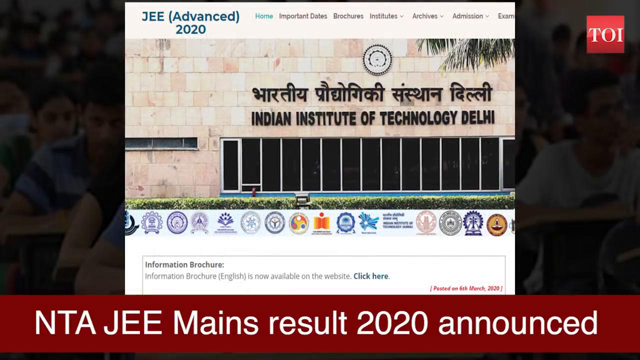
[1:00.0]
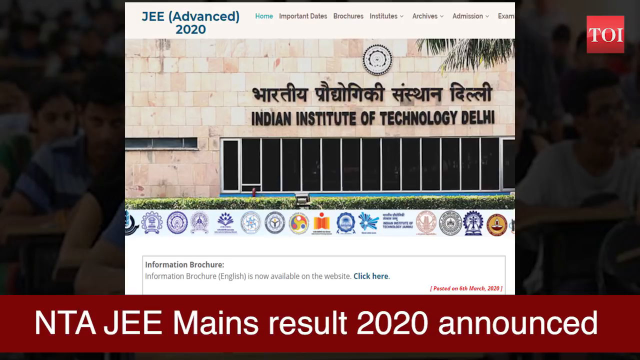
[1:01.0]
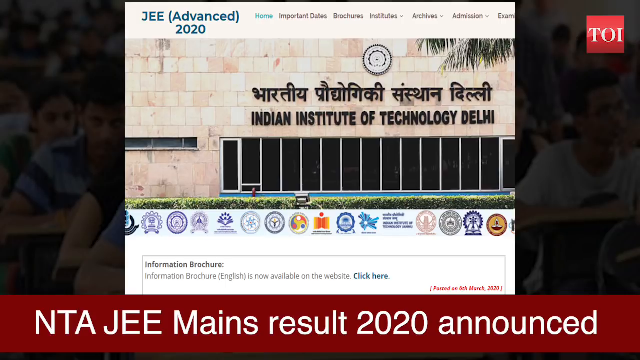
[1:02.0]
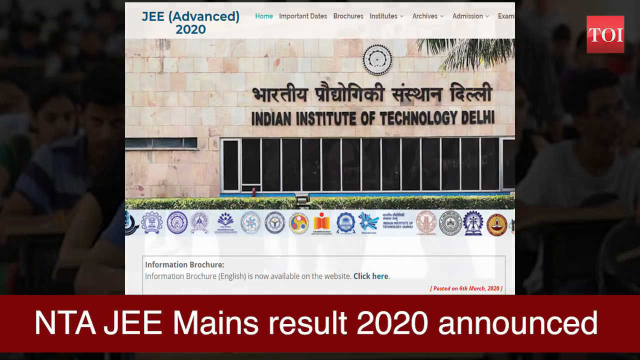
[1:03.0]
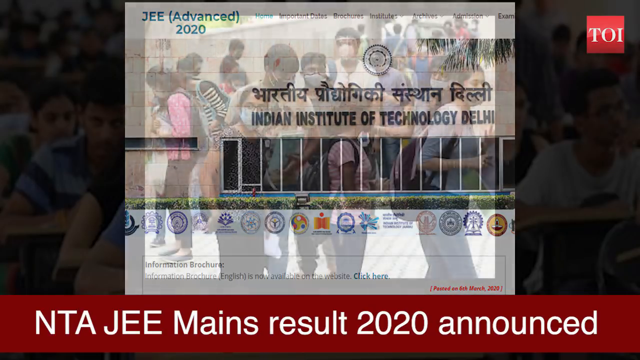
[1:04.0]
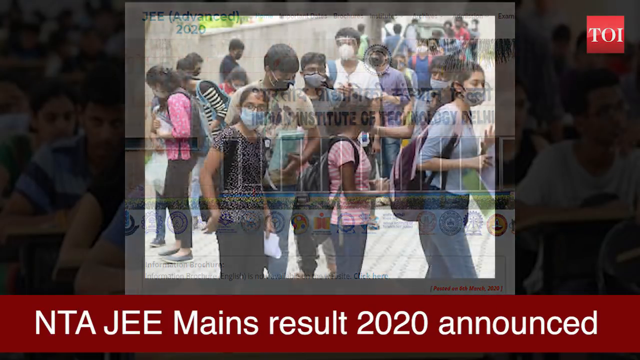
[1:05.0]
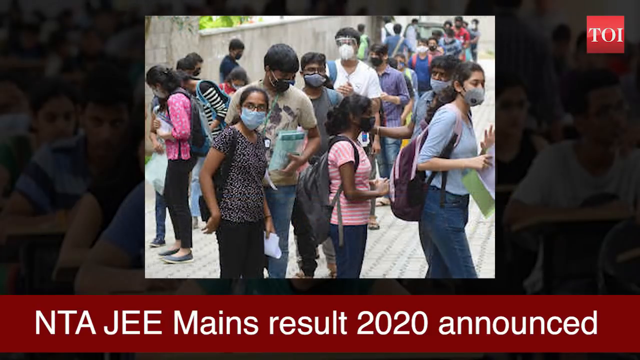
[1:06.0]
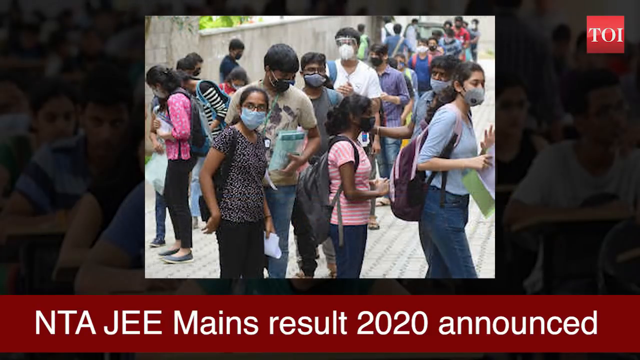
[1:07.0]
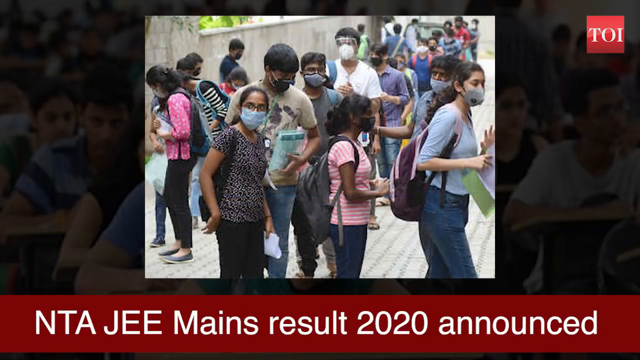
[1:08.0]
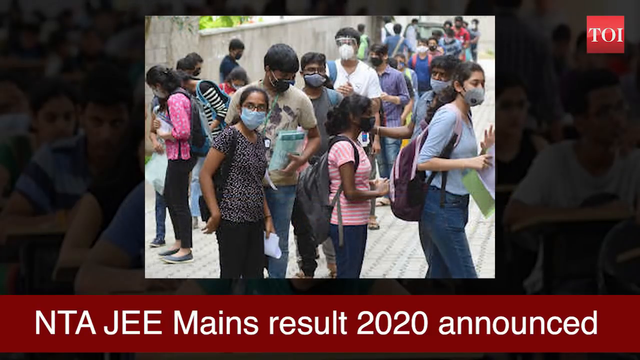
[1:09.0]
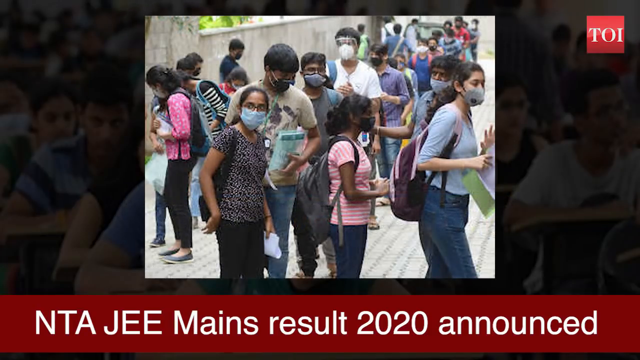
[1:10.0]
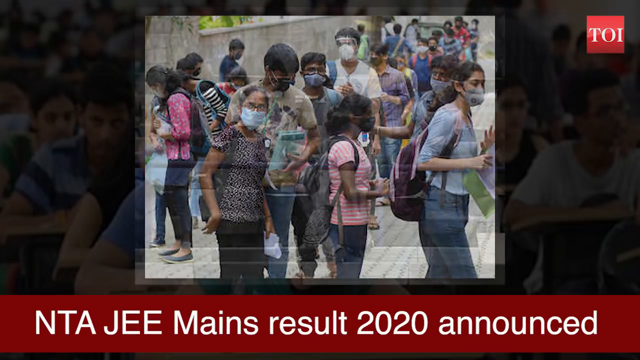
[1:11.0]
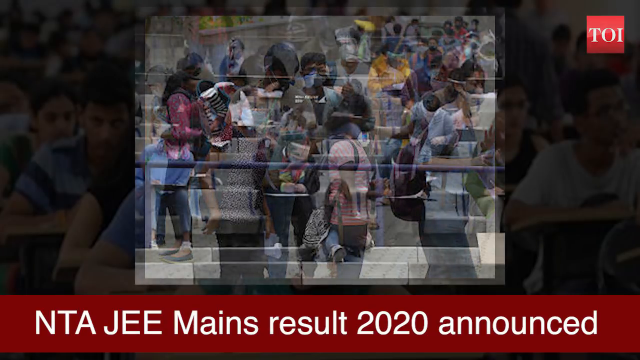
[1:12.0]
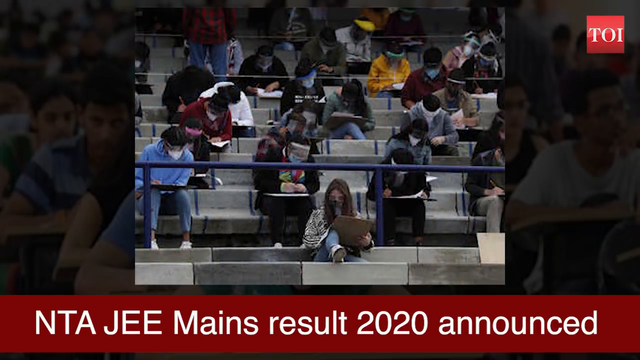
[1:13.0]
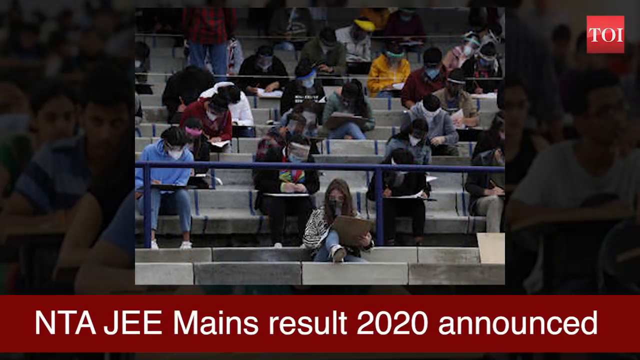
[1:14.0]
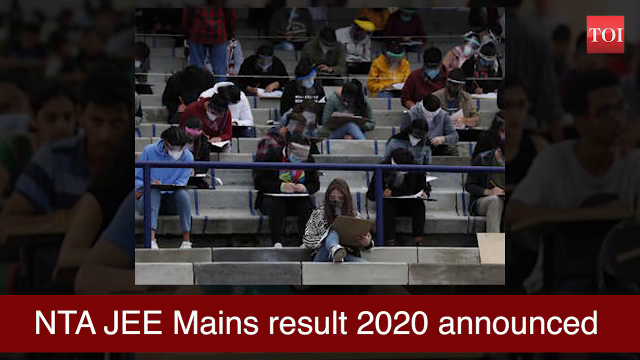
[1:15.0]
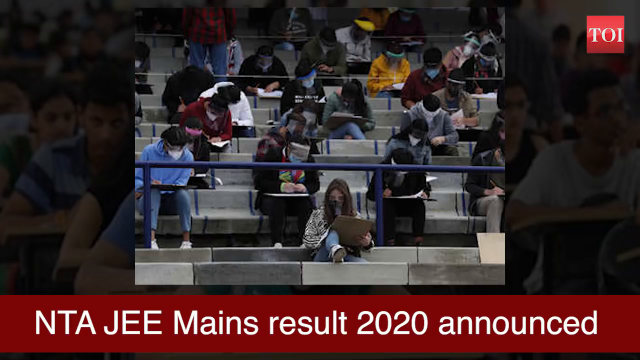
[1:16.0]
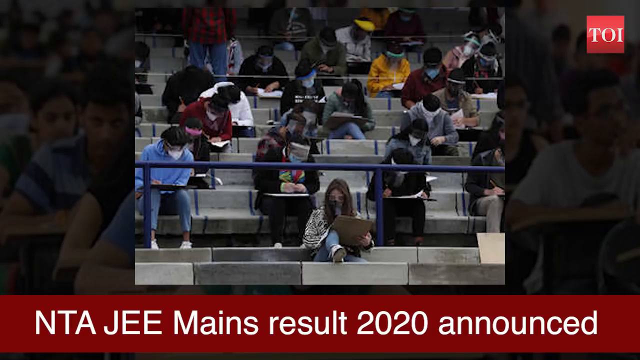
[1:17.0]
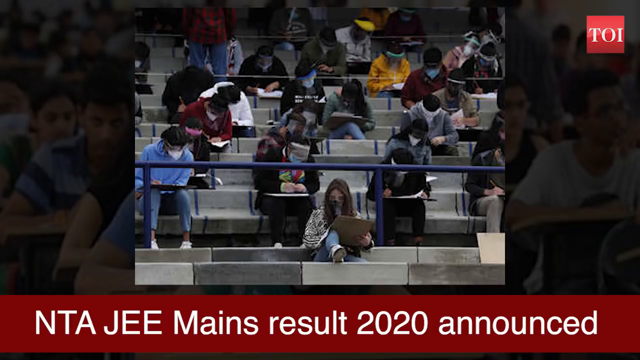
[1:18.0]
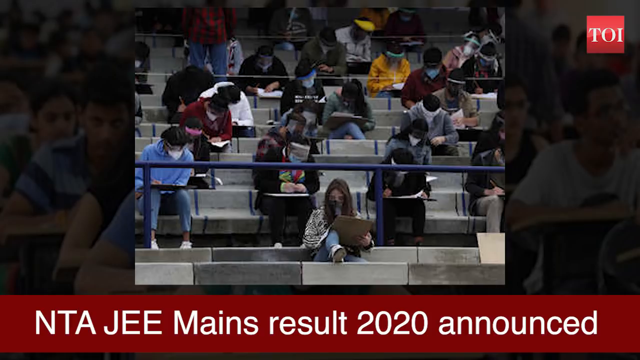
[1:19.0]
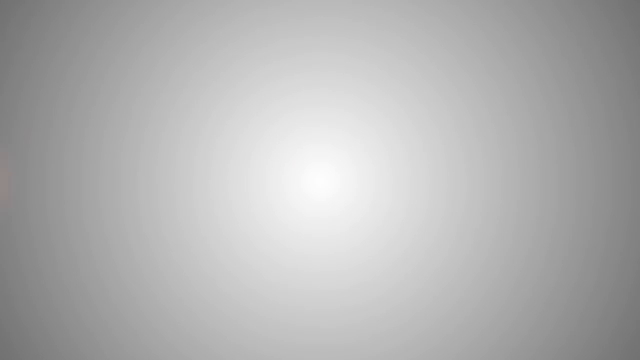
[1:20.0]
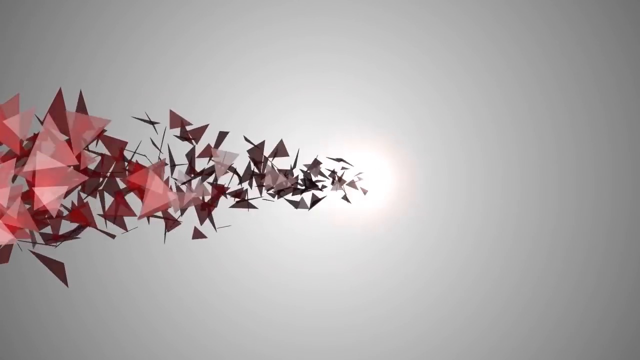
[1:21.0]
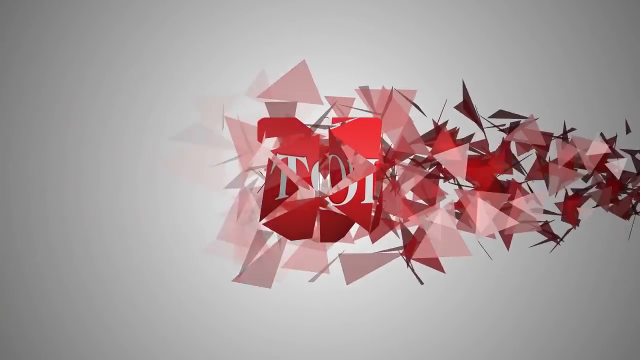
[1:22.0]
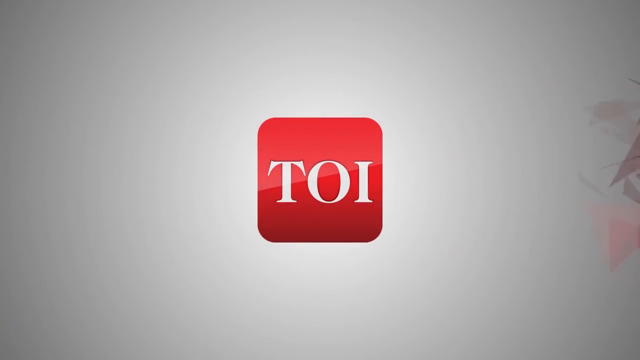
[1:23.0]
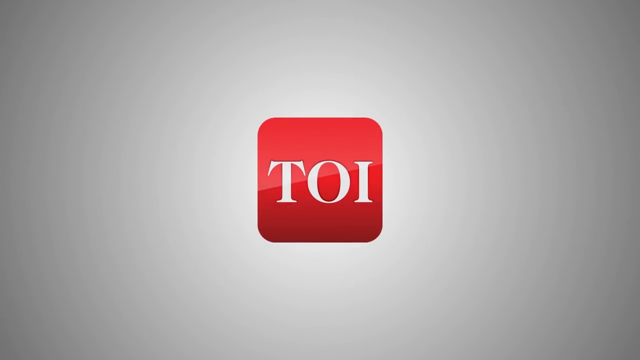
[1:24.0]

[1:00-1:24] The Indian Institute of Technology Delhi building is shown again. At the top of the screen is a notation of "JEE Advanced 2020". This appears to be from a website for the institution, with various places to click for important dates, brochures, institutes, archives, admissions, and exam. Below the picture of the institute is a series of small emblems representing an organization or certification board. The scene then shifts to the same picture as before of a crowded sidewalk of college-age individuals wearing masks; in context, they appear to be waiting in line to get into the building. Next, an auditorium shows many individuals sitting in seats, writing on paper very intently, with at least one seat between each of them. The auditorium has stadium seating, tiered upward with steps to climb to the level seating areas.